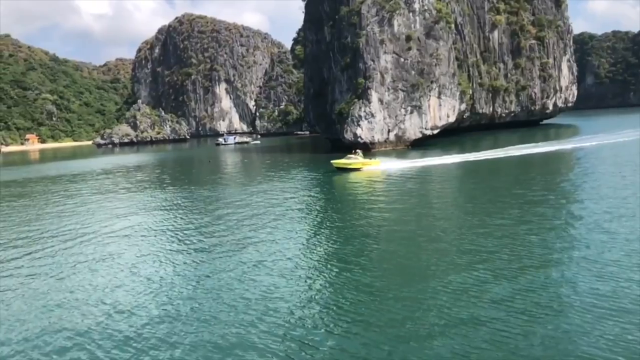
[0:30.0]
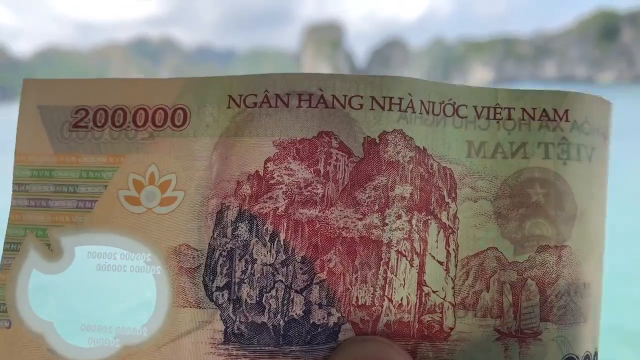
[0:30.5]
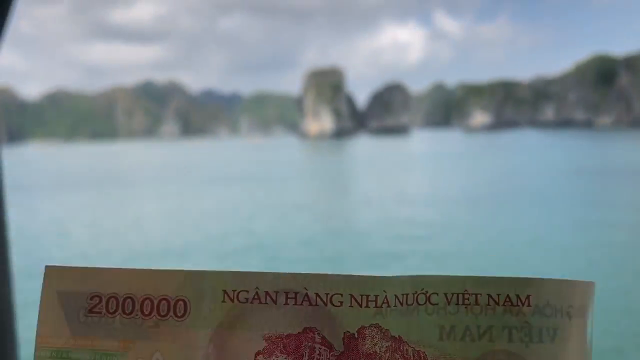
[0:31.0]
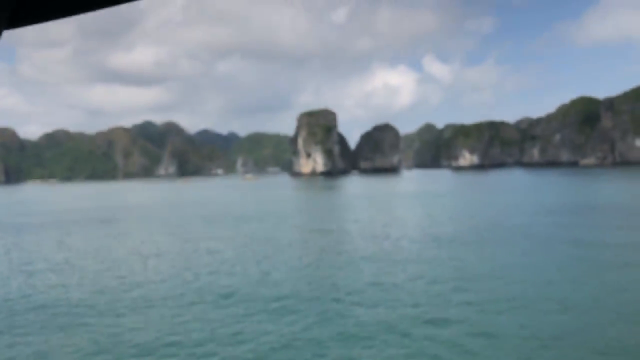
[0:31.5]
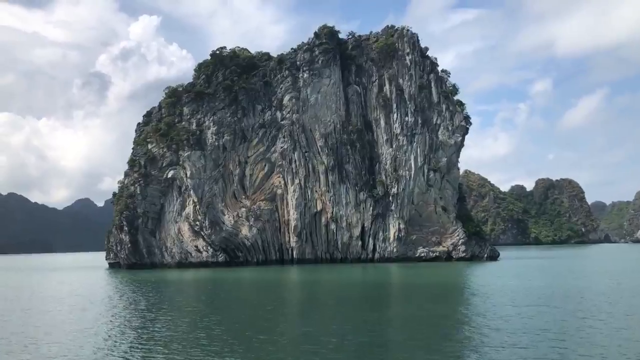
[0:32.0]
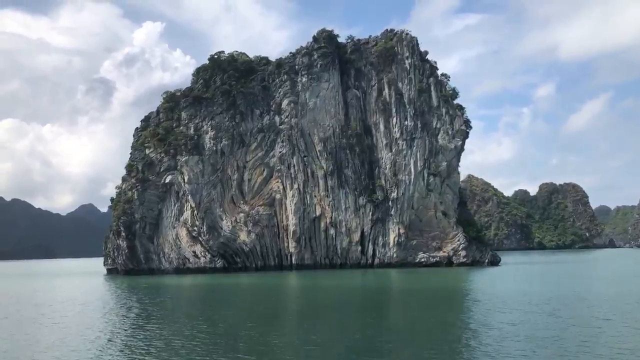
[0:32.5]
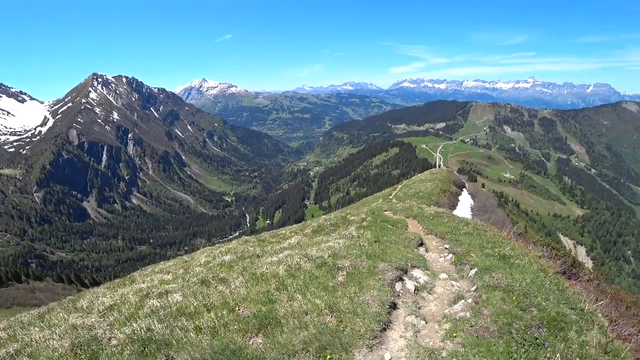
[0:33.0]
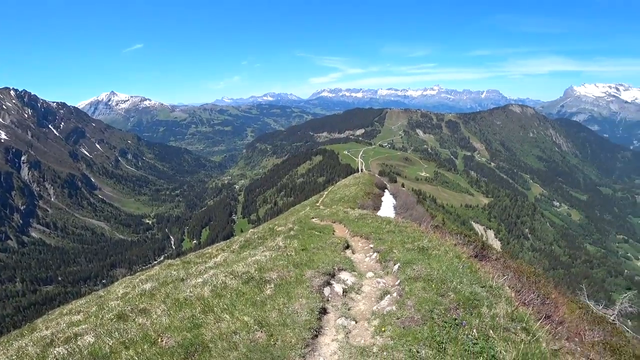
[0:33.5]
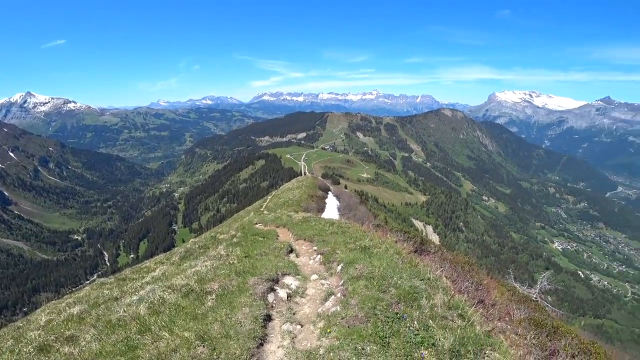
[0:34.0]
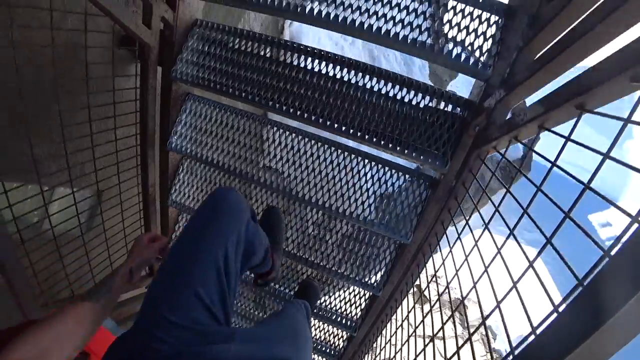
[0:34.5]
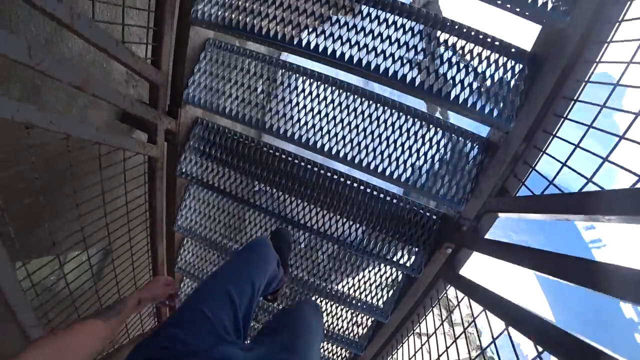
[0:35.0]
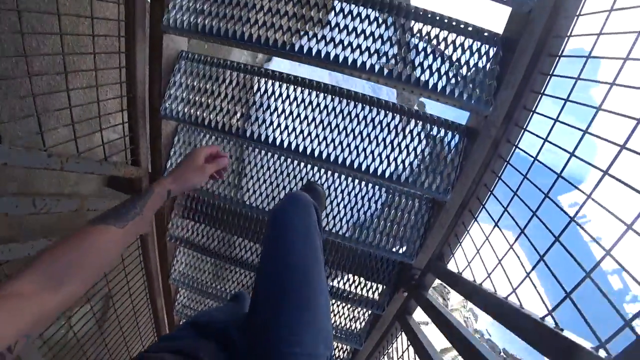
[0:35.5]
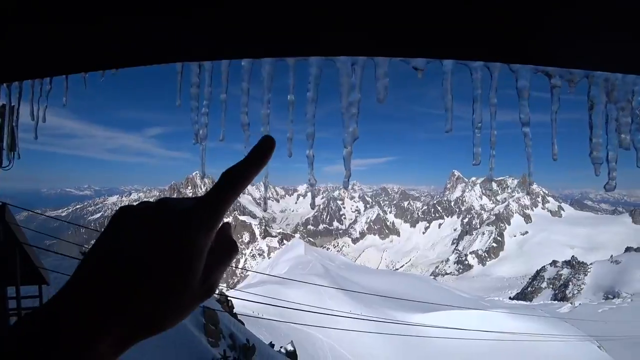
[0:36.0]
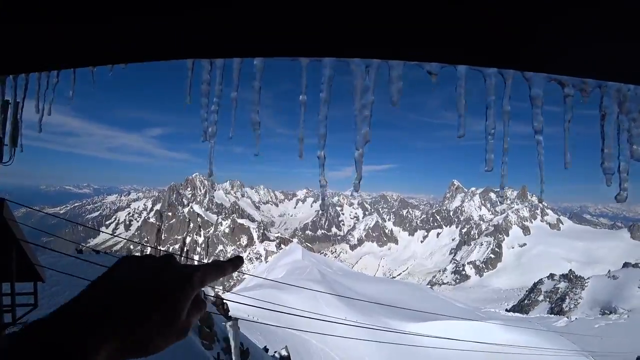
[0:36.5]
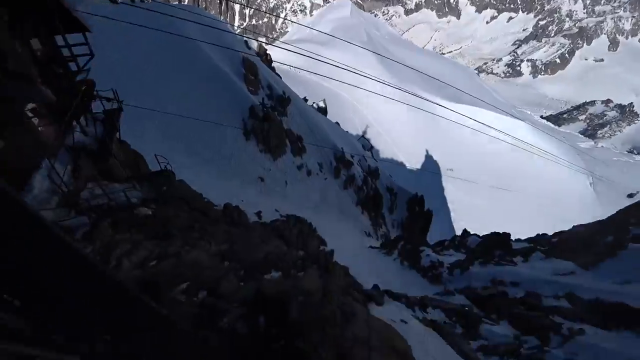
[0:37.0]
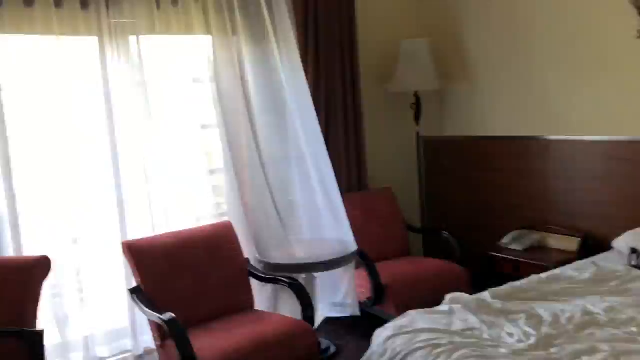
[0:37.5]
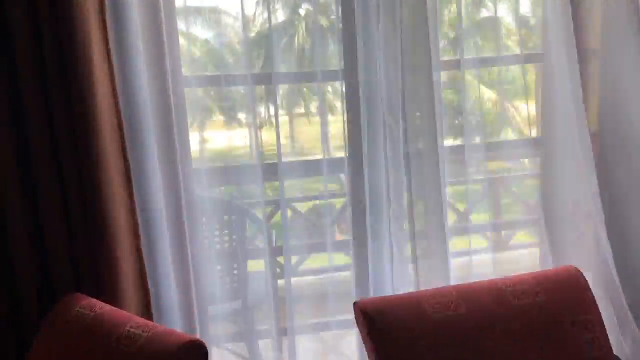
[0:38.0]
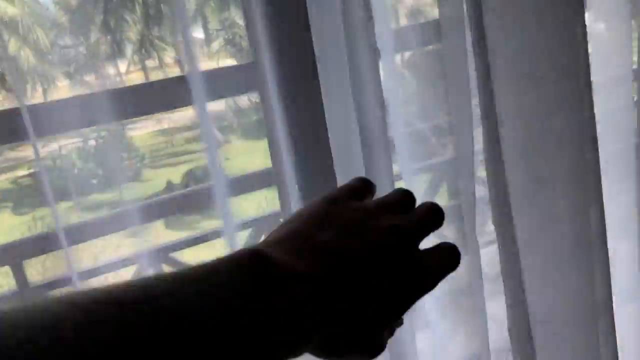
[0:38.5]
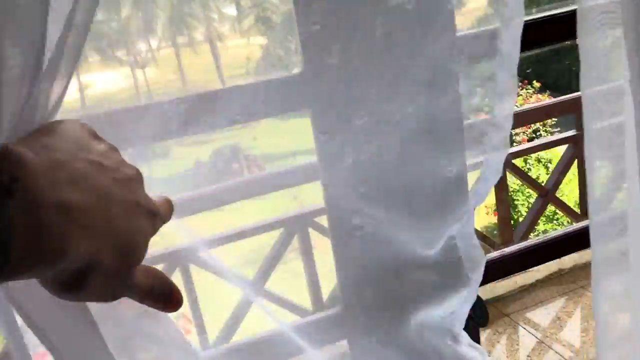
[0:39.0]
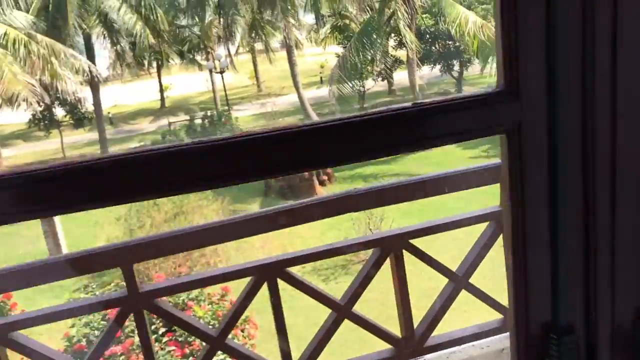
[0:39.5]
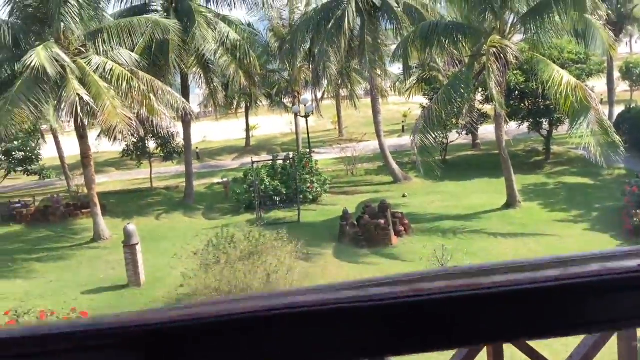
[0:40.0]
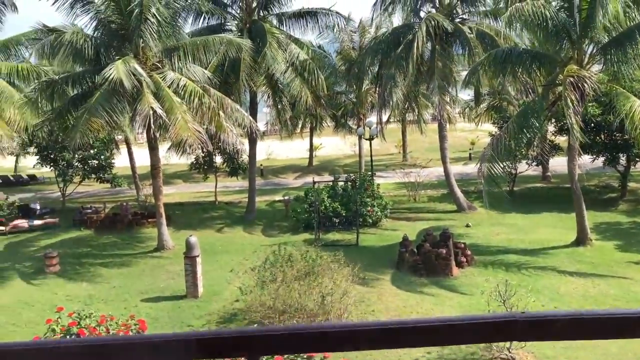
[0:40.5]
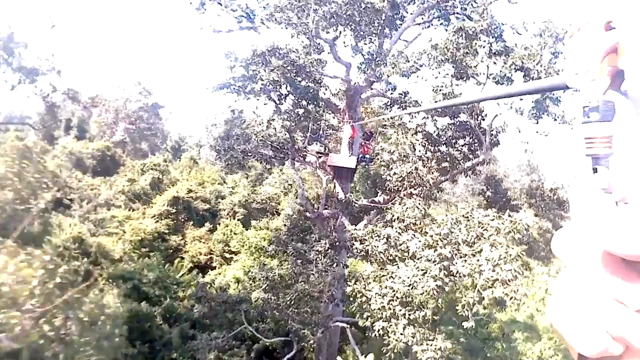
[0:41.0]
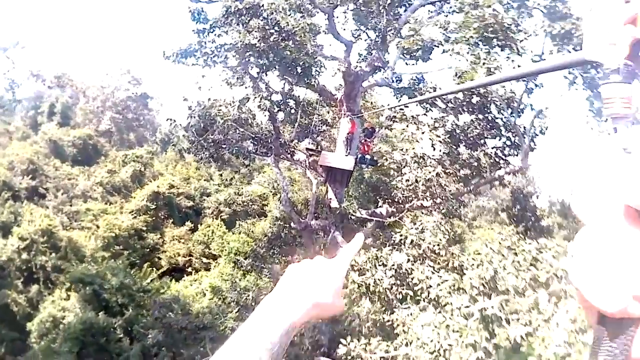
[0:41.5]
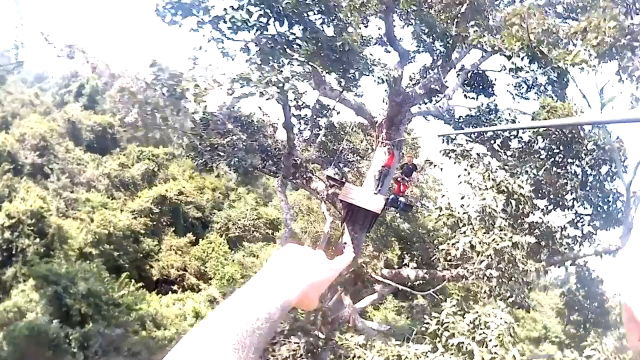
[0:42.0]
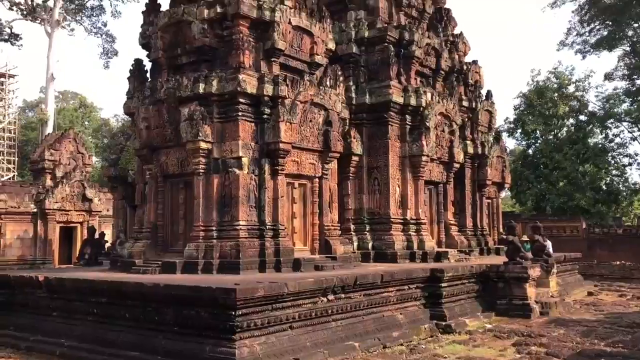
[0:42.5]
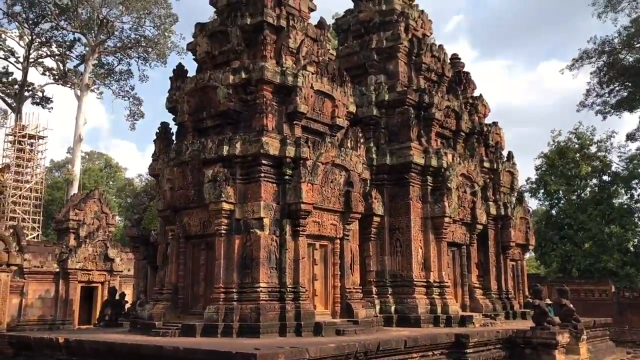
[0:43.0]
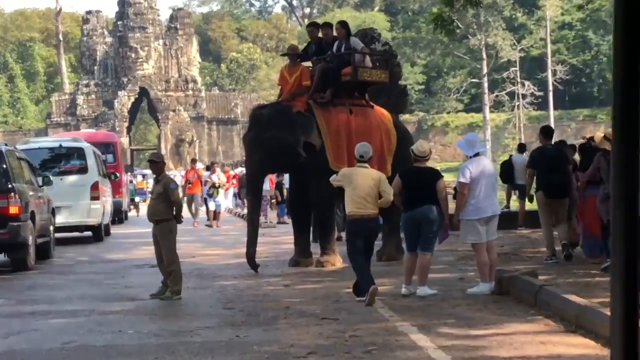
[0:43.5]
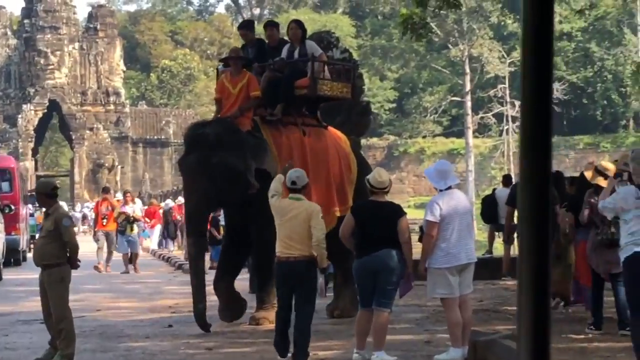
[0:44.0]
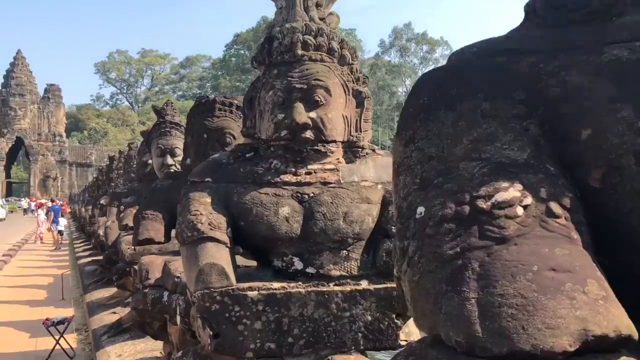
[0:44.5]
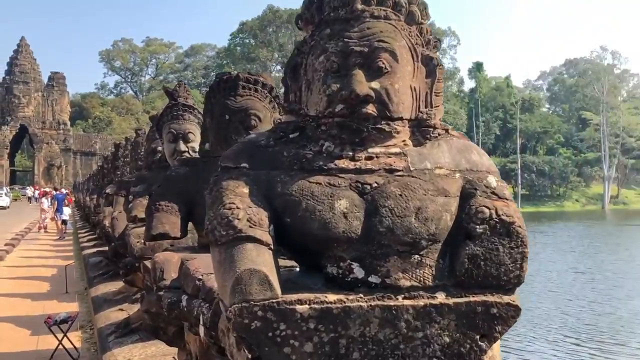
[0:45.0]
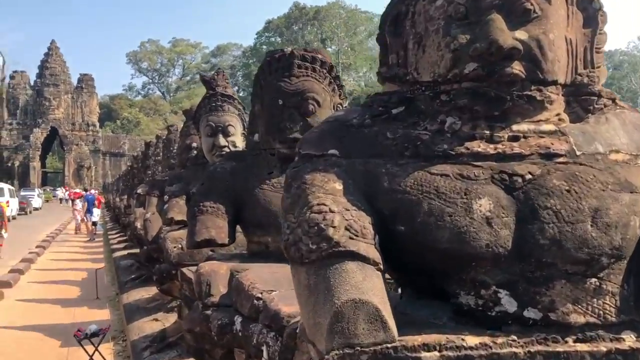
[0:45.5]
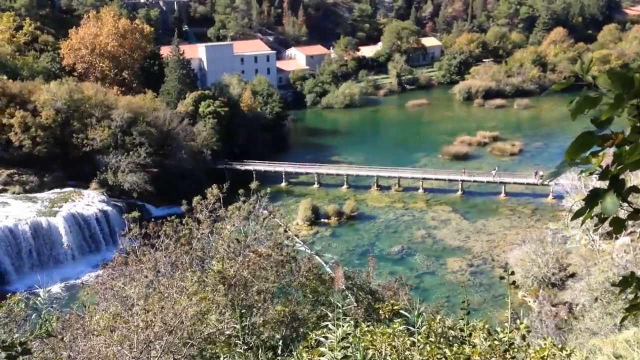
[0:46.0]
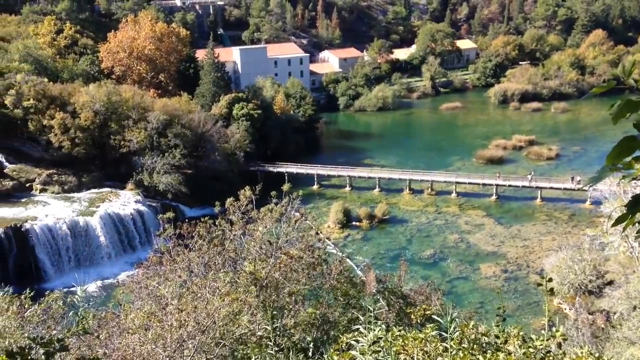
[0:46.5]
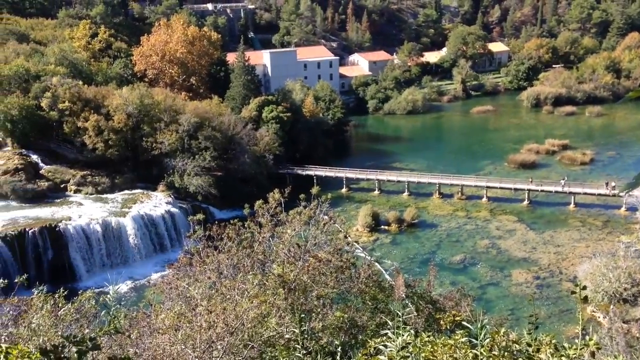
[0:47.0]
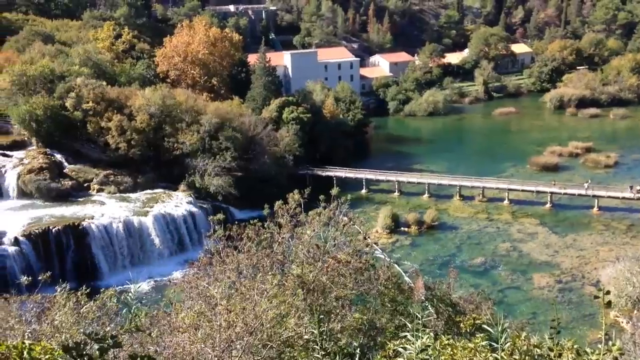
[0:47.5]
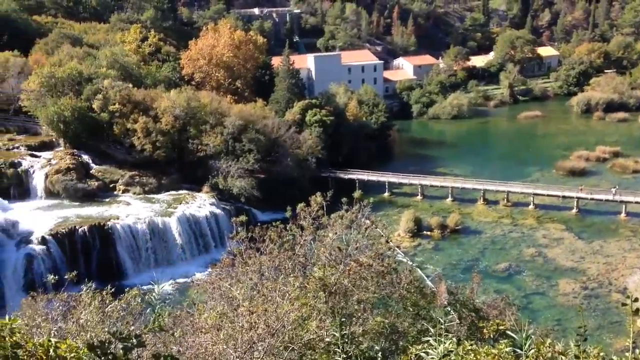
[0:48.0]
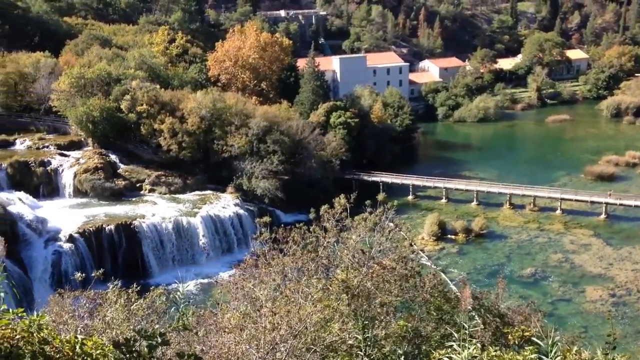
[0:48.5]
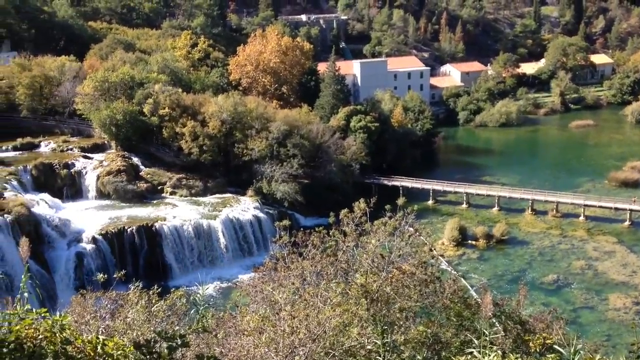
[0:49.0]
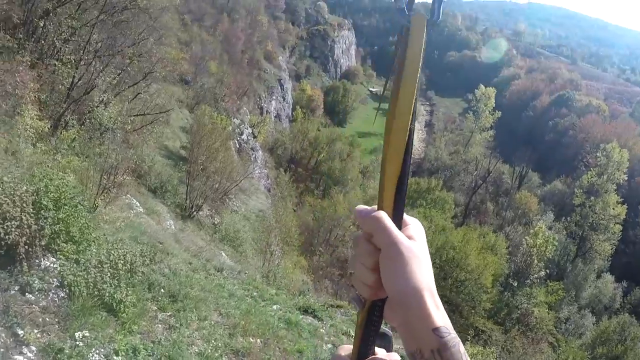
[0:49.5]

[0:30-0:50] The scene opens on aquamarine-coloured water. Two huge boulder rocks are side by side in the background, and a white boat sails by. A person holds money, then there is a close-up view of a boulder rock. Tall mountainous regions follow, with lots of vegetation covering the mountains; the mountains in the background seem to be snow-covered against a blue sky. A person's steps climb up a metal stairway, and through a window, tall snow-covered mountain peaks are visible in the distance. There is ice on the window, and a pointing finger pokes at some of the ice. Inside a room there are white drapes and red chairs; a hand pulls the white drapes, revealing the view outside through the window. A cable connects tree to tree, and the view is from the height of the cable. Next comes what seems to be a large, rocky, stone-hewn temple, reddish in colour. People ride on an elephant, and there are lots of stone statues. An aerial view shows a bridge with a waterfall to its left and some houses in the distance surrounded by vegetation.